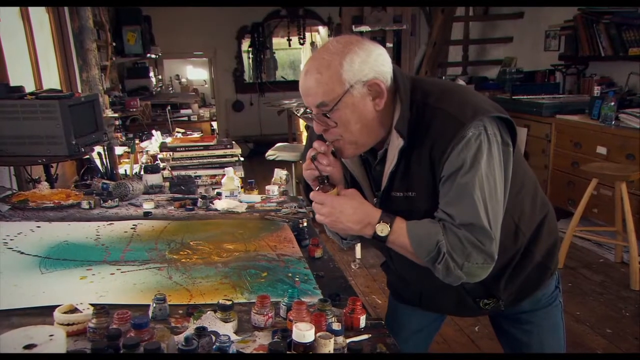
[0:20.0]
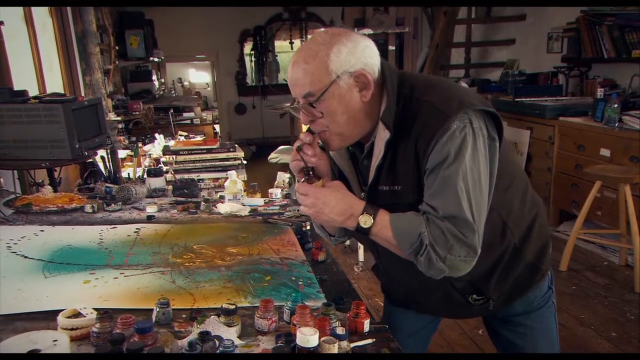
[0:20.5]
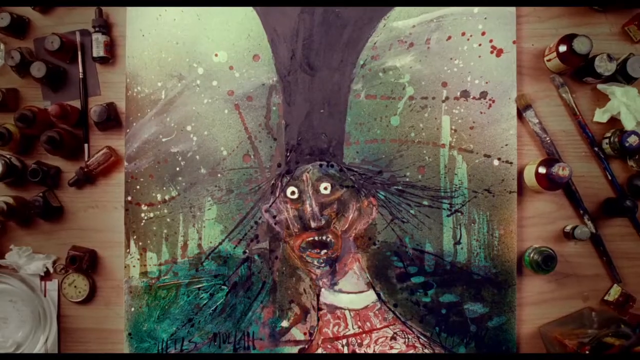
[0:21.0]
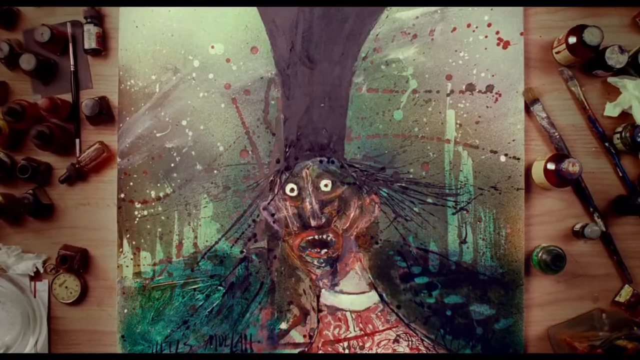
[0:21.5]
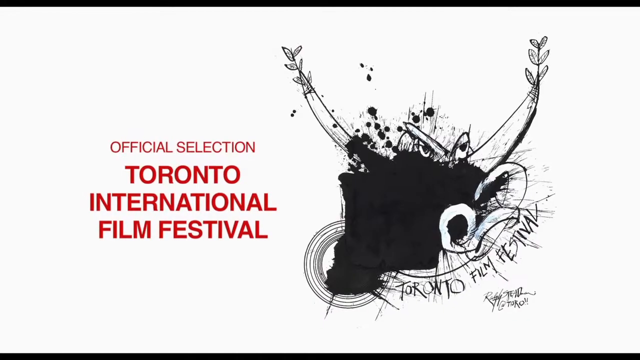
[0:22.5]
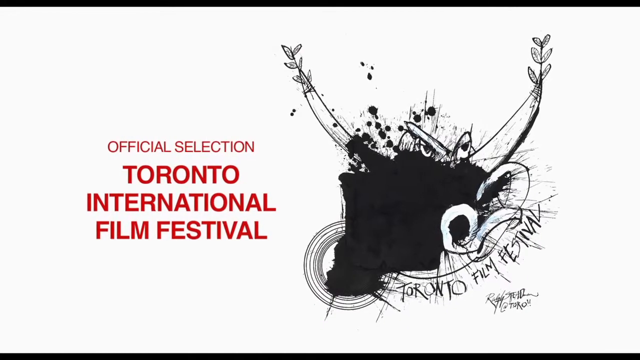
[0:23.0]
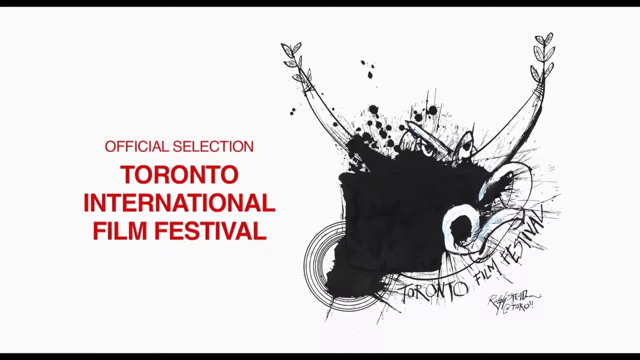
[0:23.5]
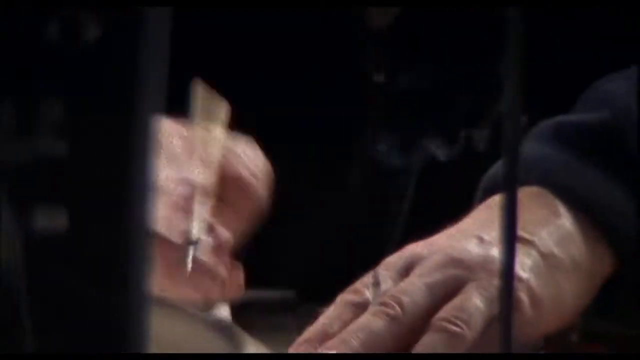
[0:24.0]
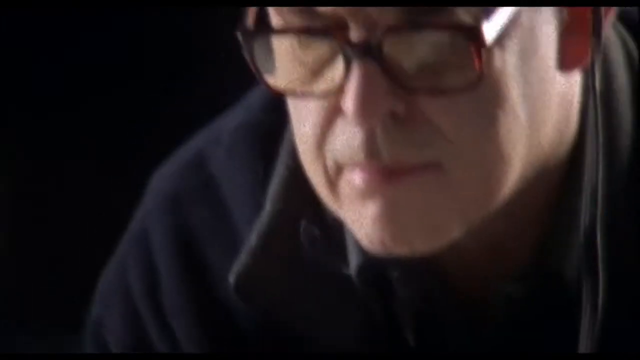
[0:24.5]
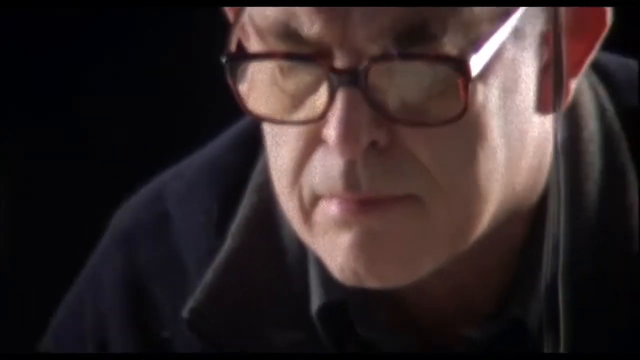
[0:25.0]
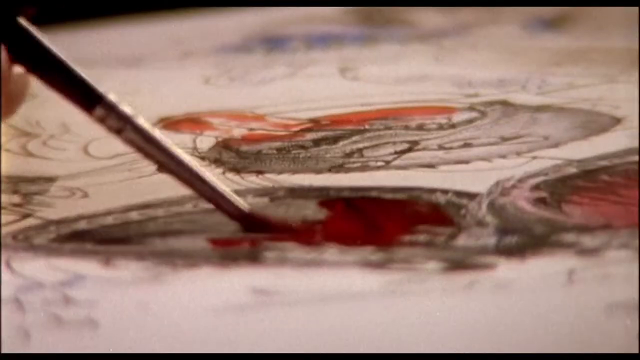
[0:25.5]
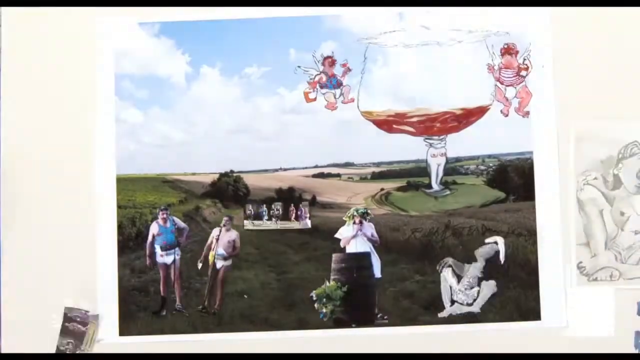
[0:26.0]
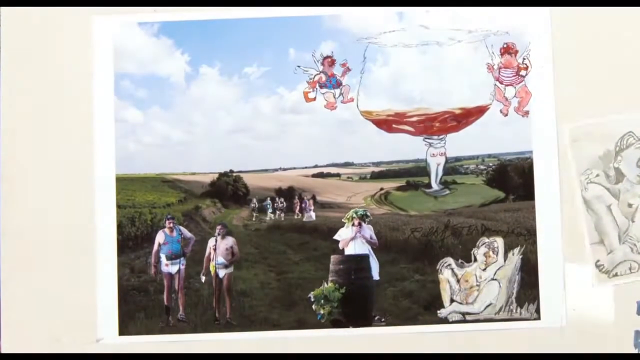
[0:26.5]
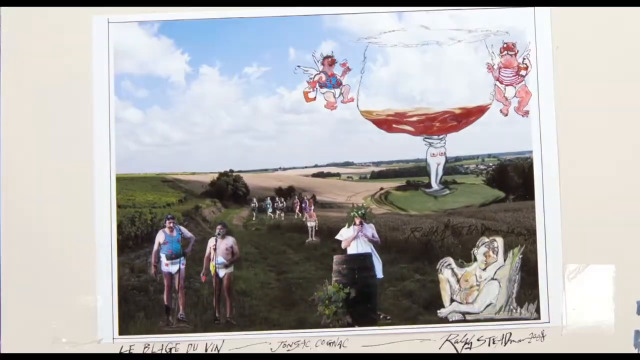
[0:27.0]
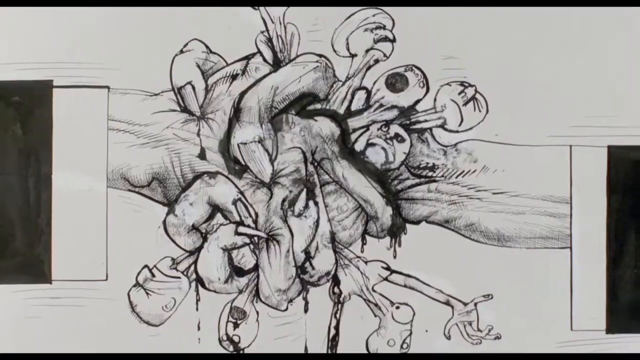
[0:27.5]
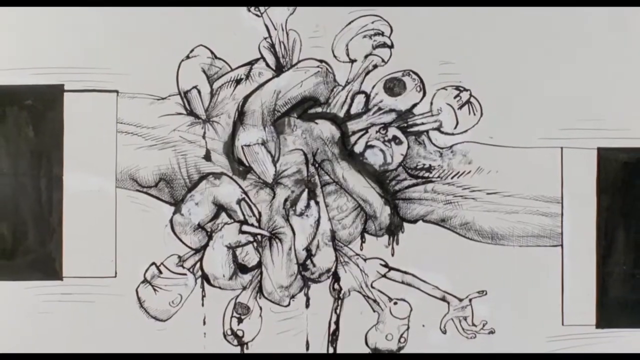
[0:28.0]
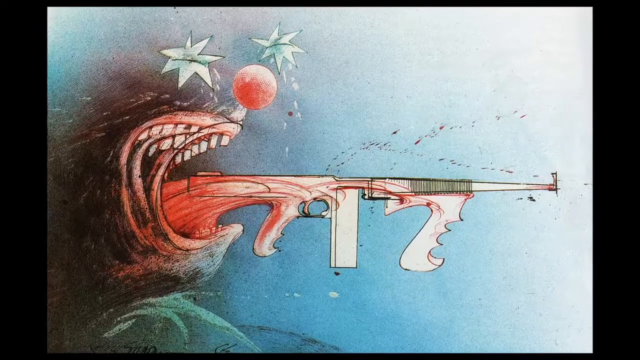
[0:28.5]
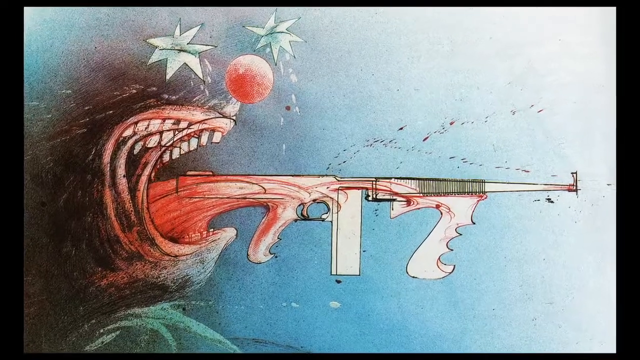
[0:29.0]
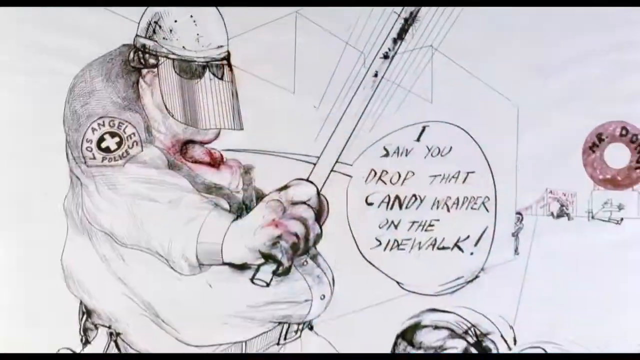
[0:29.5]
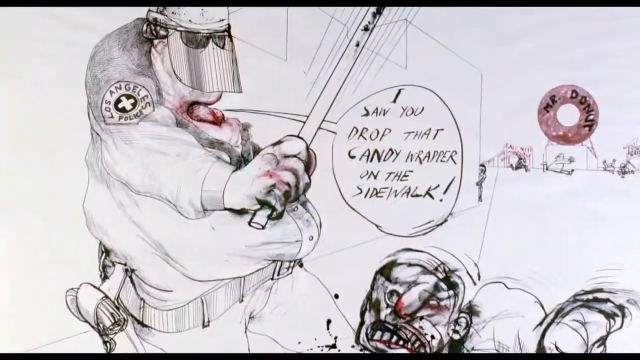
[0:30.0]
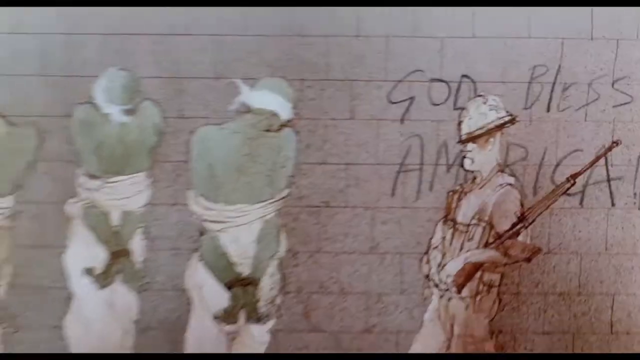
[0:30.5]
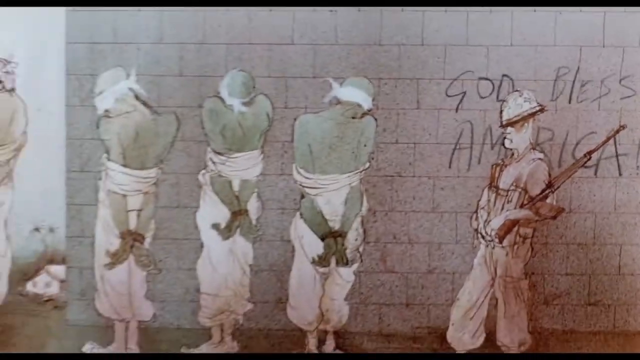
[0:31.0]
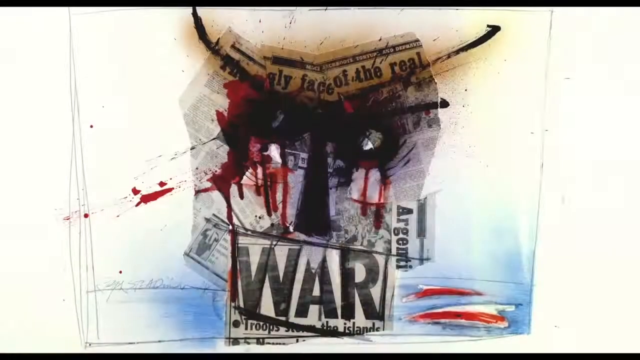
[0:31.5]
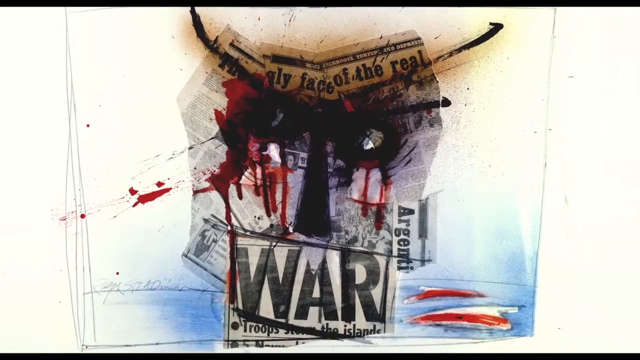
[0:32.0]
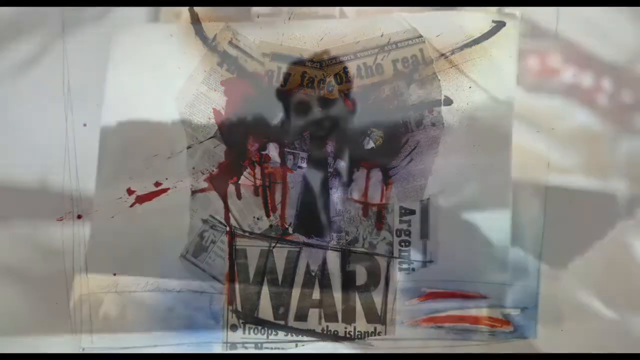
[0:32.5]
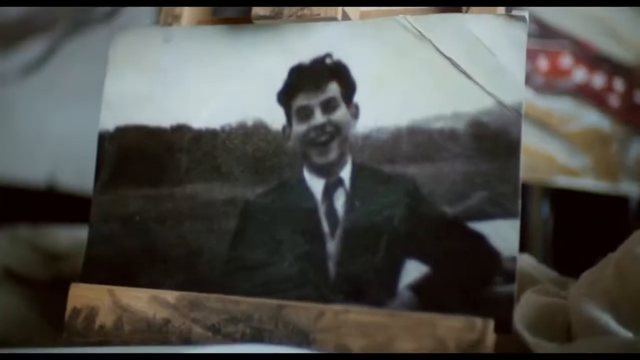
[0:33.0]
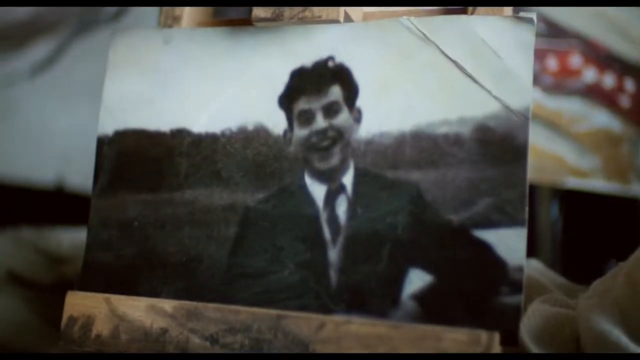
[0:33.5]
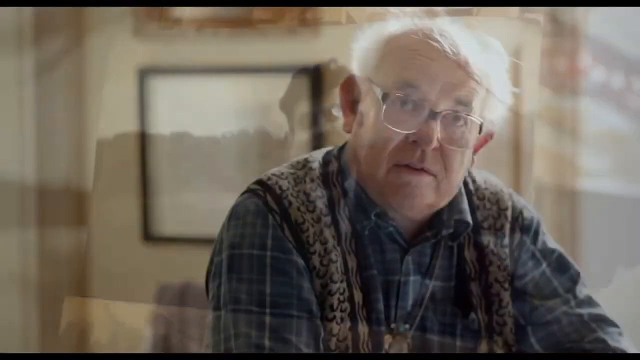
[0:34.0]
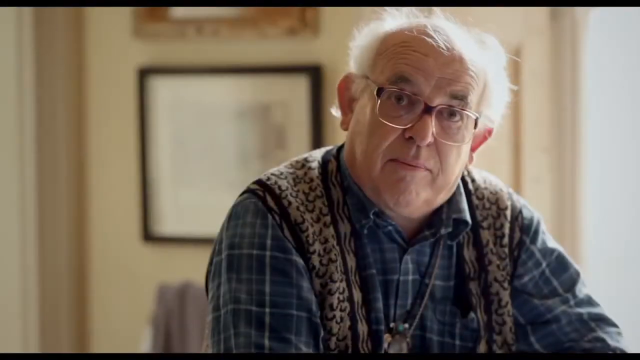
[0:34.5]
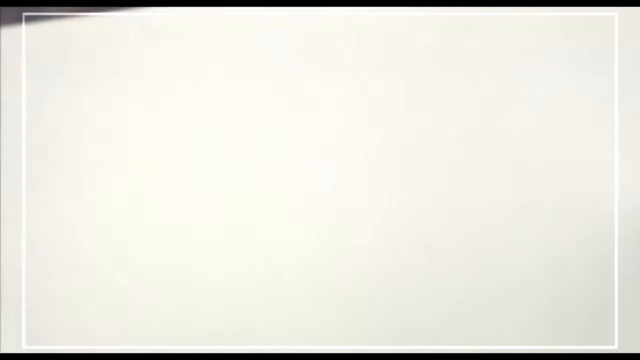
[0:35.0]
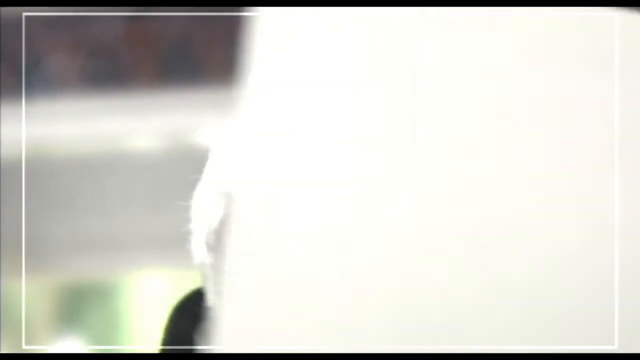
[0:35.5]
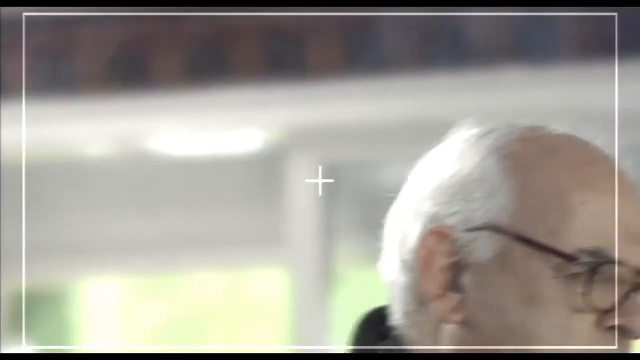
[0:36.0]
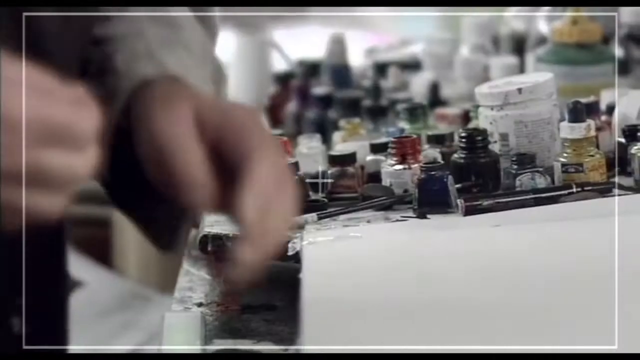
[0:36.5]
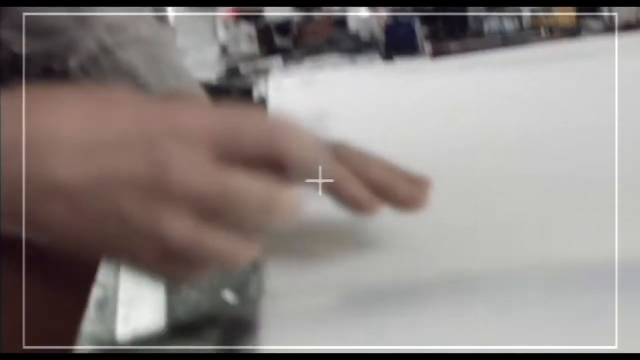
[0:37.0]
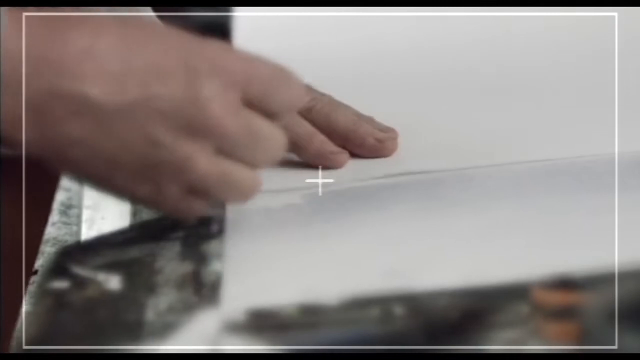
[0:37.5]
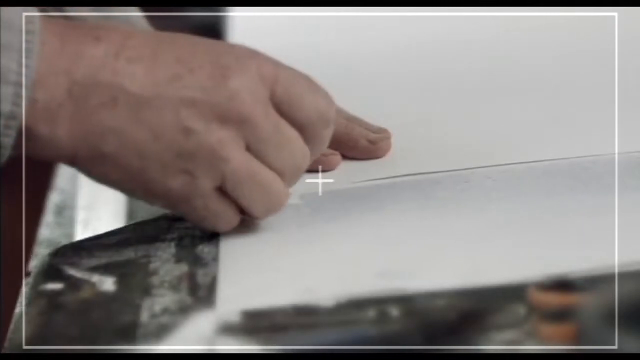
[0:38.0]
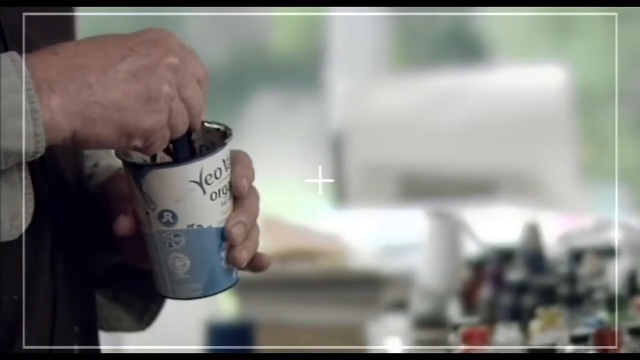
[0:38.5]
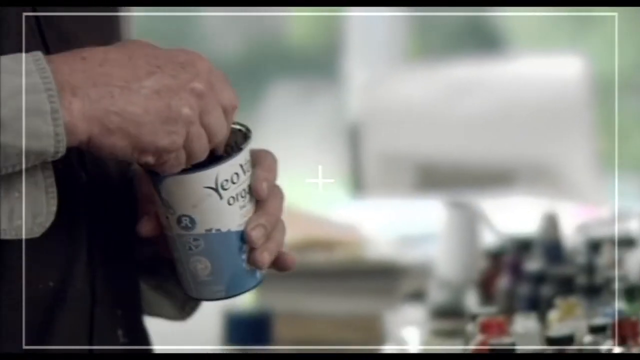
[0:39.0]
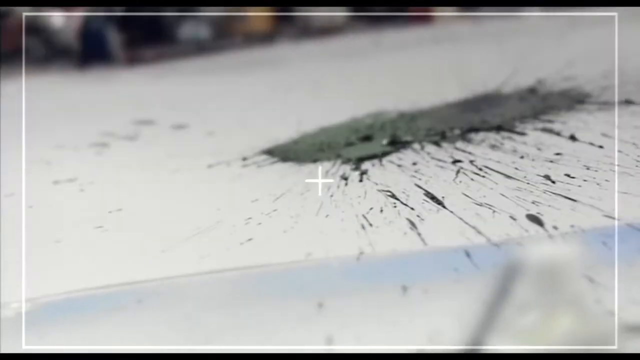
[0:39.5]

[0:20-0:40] A man does paintings, and the Sony Pictures Classics logo appears with a blue background. The man sprinkles ink, including red ink, creating a figure that looks like a monster on paper. An official Toronto International Film Festival mark appears. The man, an artist, is middle-aged, apparently in his 60s, bald with gray hair on the sides, and wears a gray shirt, a black jacket and spectacles. He is in the middle of designing something.